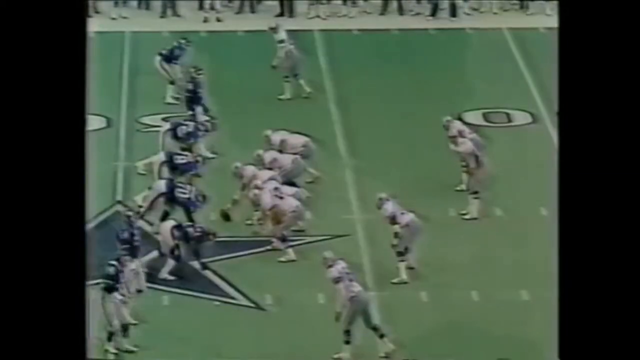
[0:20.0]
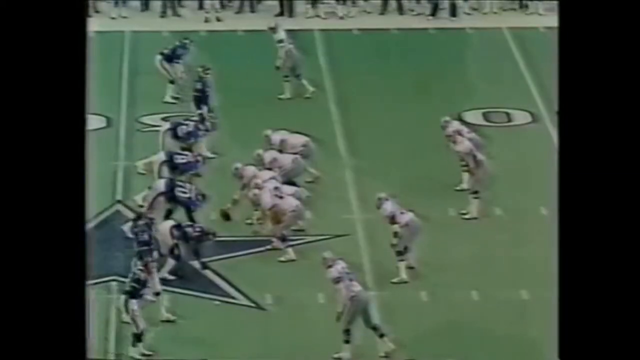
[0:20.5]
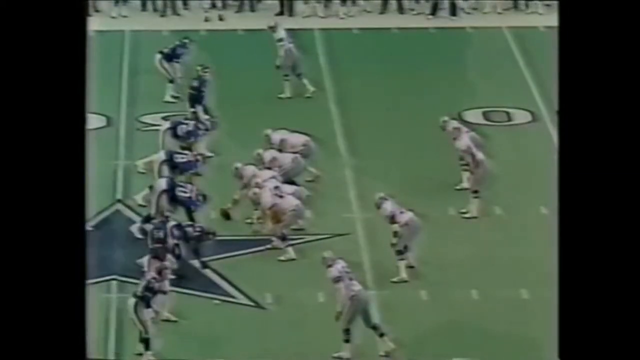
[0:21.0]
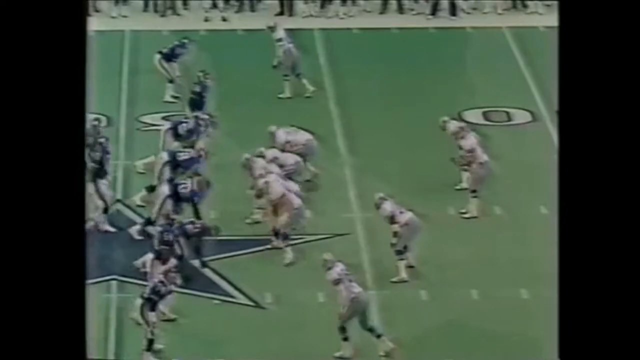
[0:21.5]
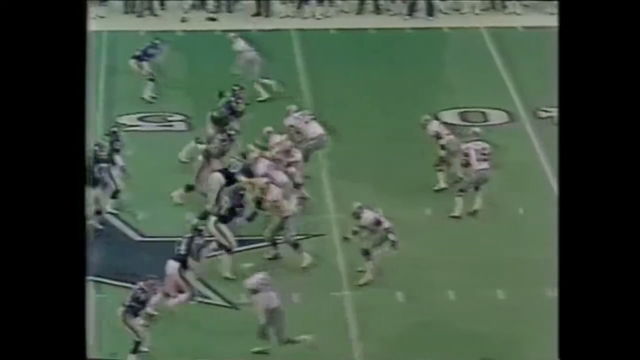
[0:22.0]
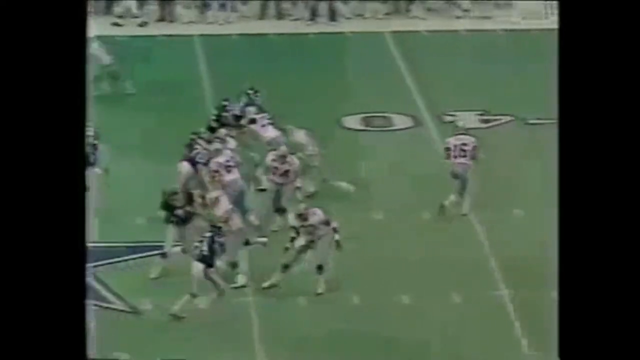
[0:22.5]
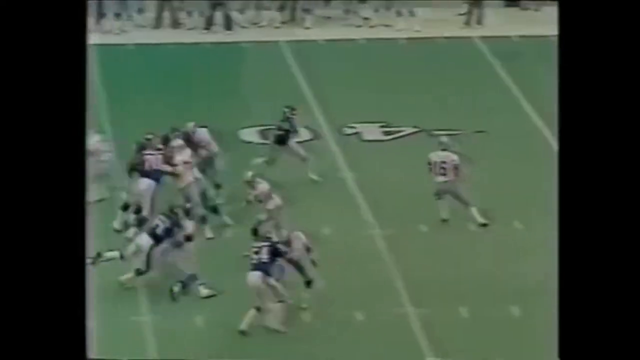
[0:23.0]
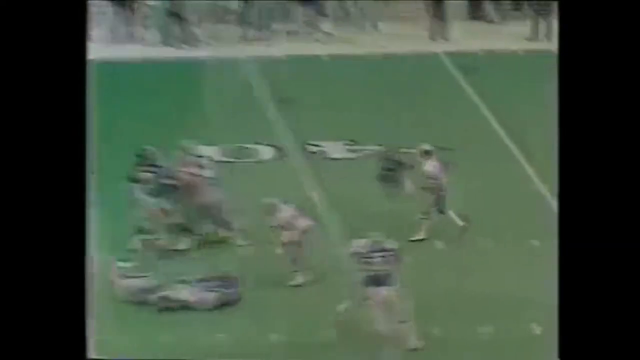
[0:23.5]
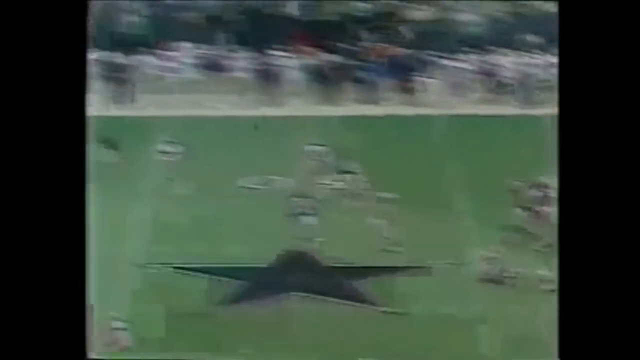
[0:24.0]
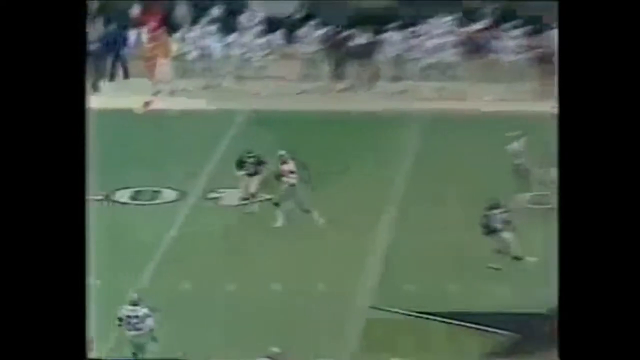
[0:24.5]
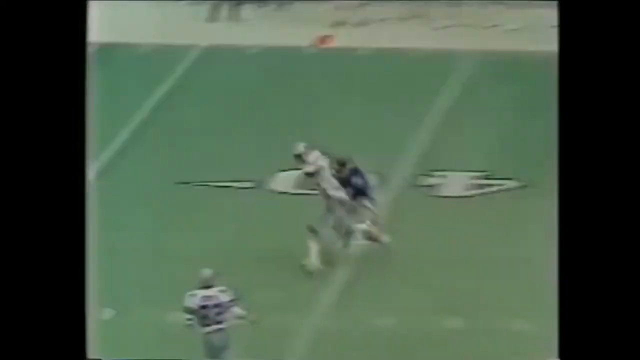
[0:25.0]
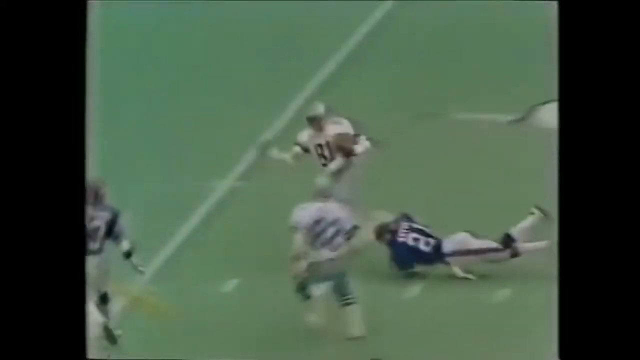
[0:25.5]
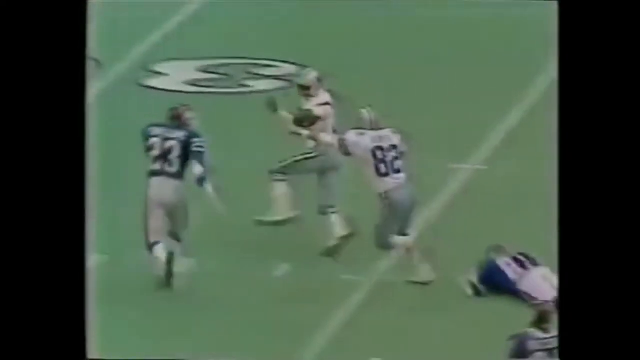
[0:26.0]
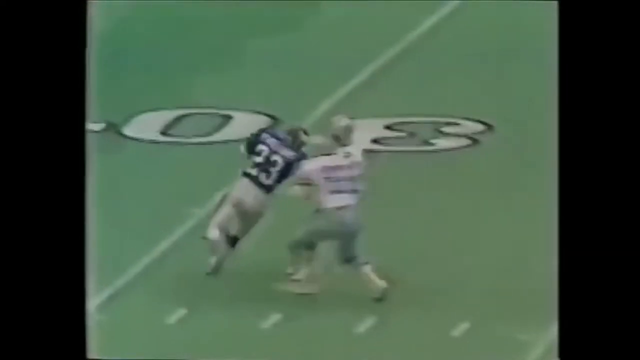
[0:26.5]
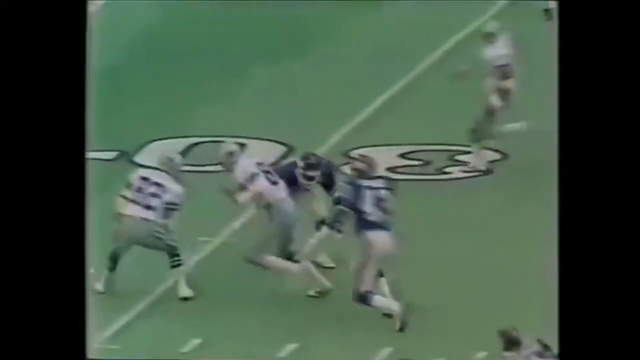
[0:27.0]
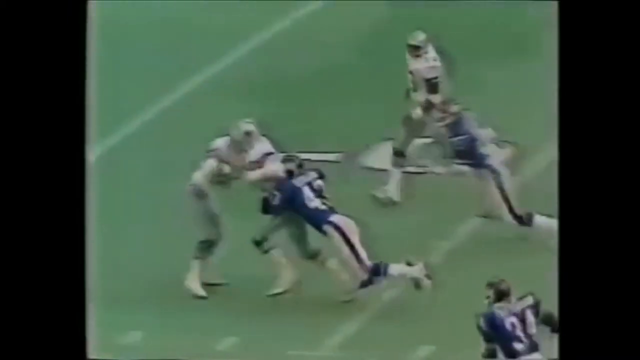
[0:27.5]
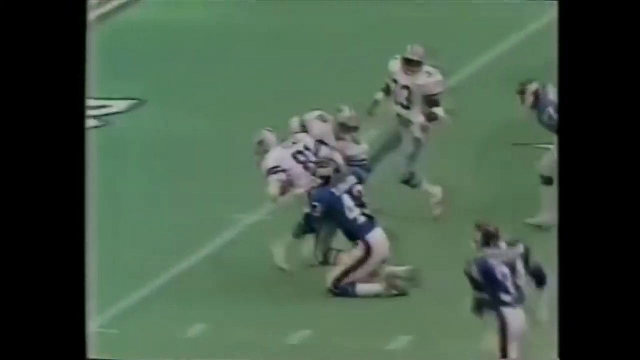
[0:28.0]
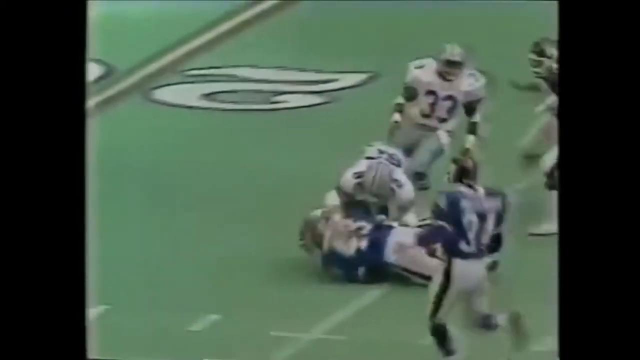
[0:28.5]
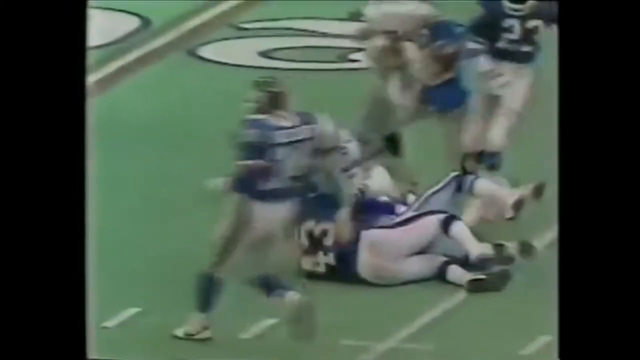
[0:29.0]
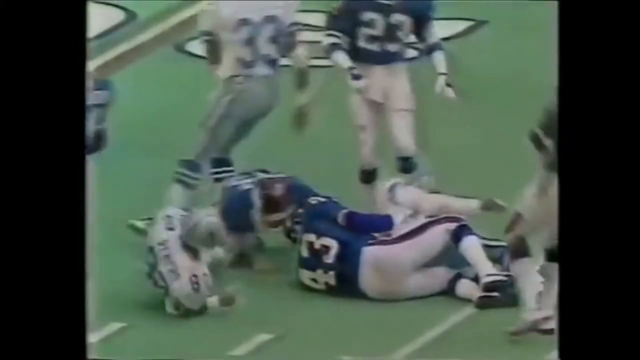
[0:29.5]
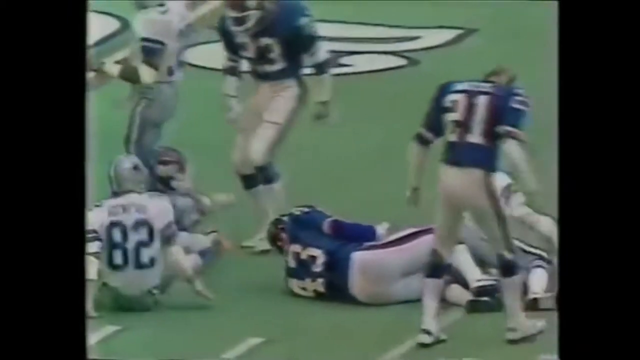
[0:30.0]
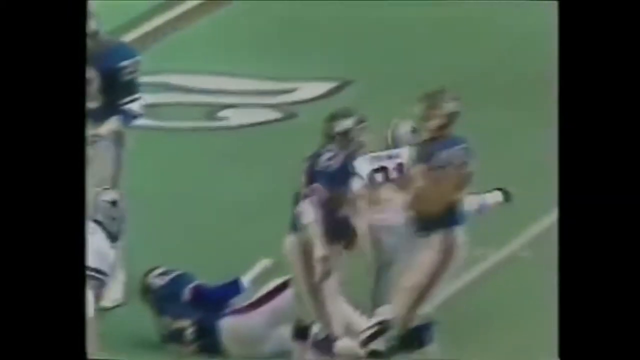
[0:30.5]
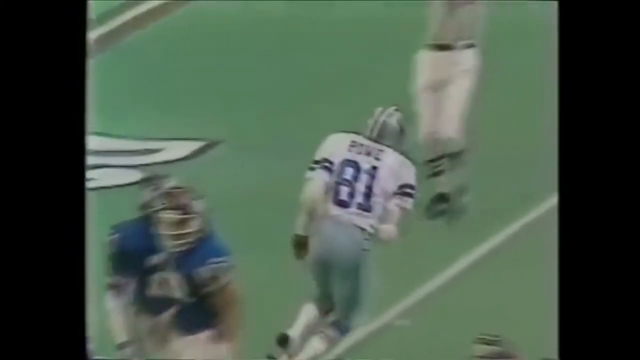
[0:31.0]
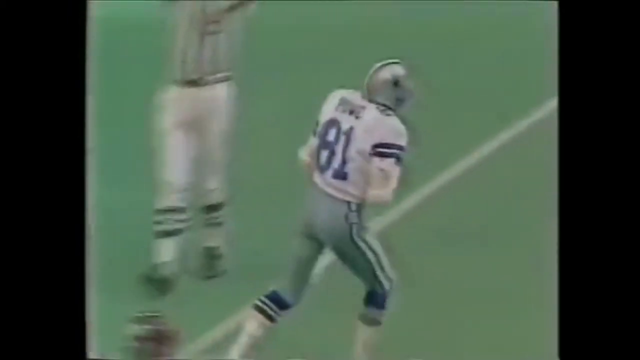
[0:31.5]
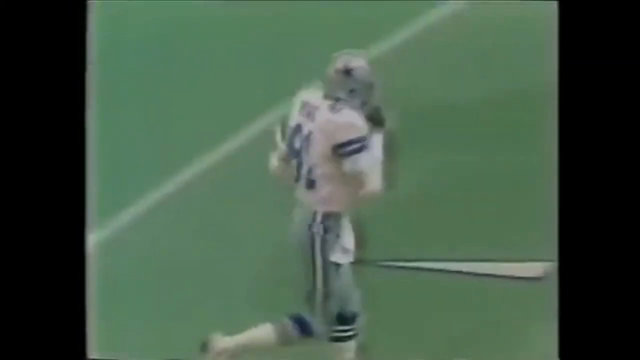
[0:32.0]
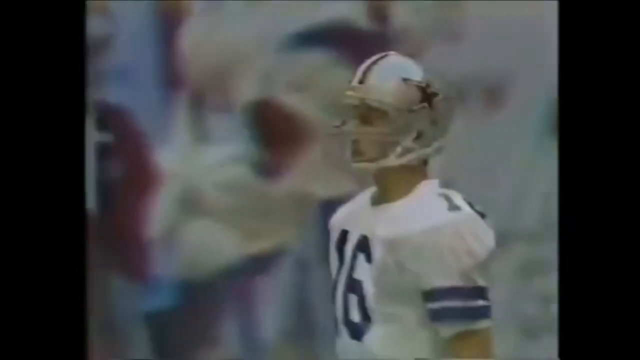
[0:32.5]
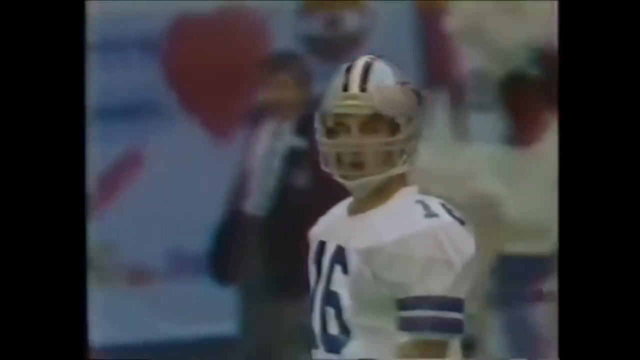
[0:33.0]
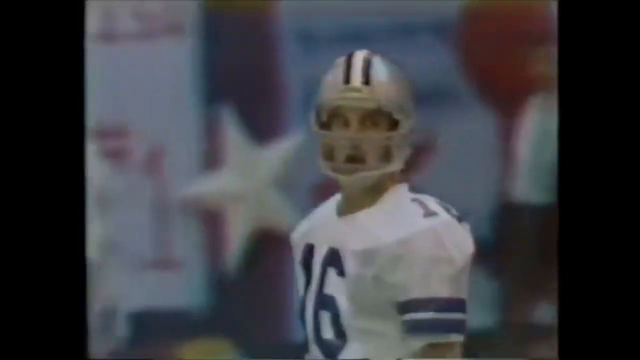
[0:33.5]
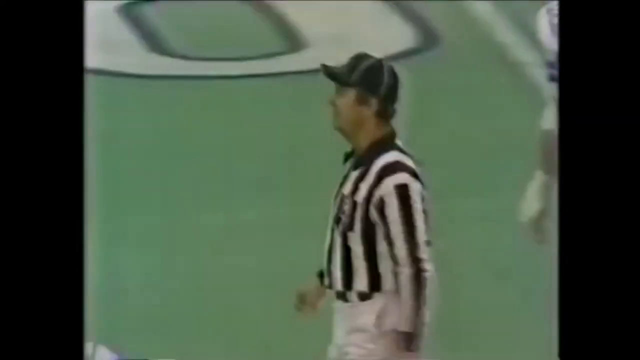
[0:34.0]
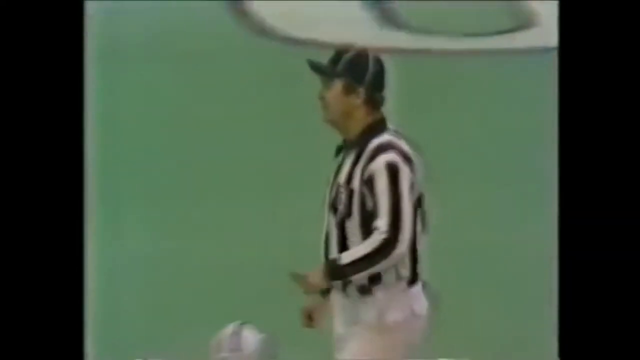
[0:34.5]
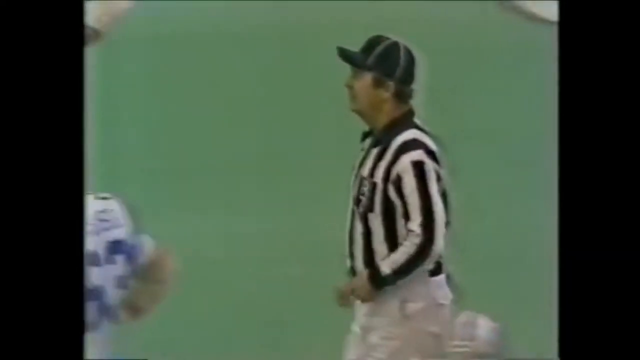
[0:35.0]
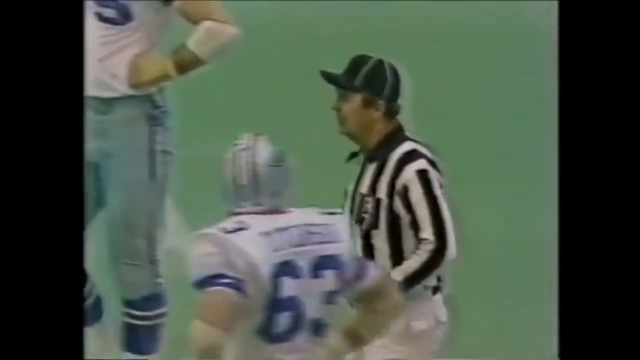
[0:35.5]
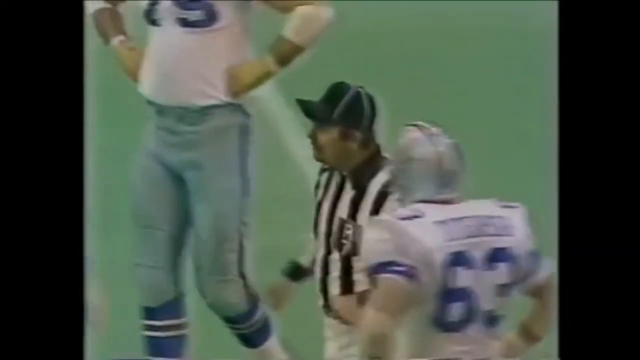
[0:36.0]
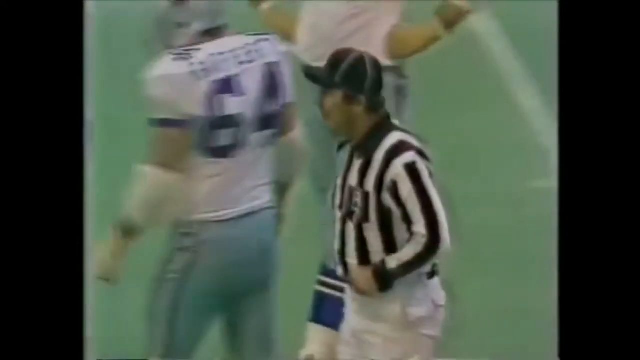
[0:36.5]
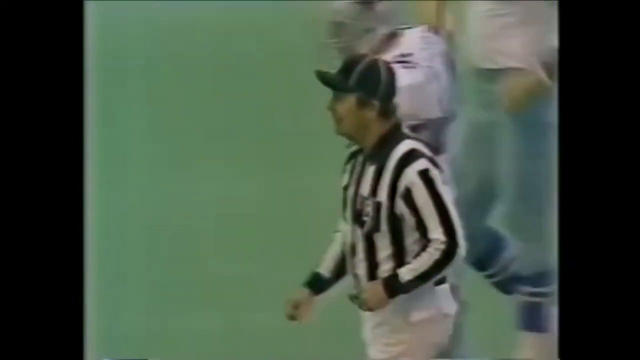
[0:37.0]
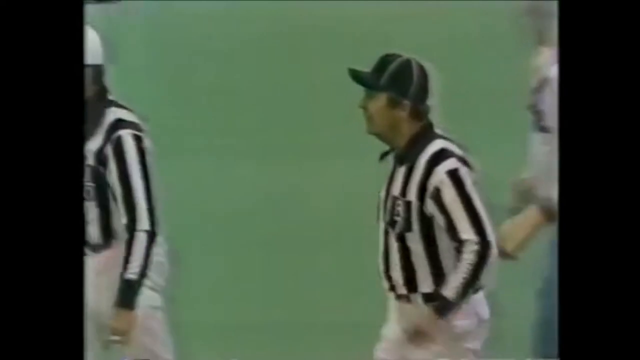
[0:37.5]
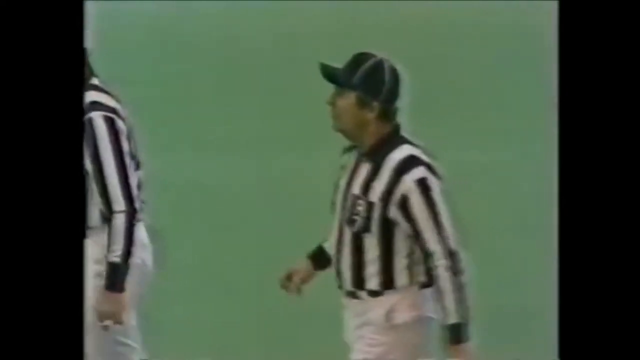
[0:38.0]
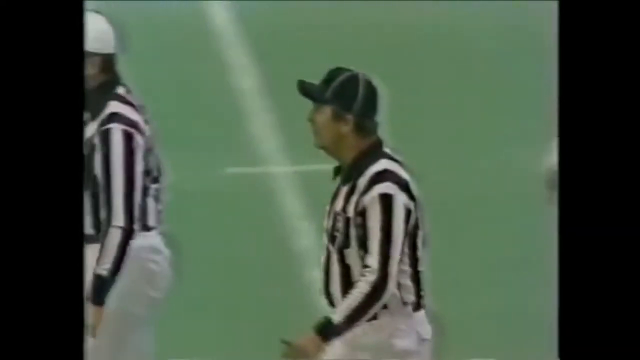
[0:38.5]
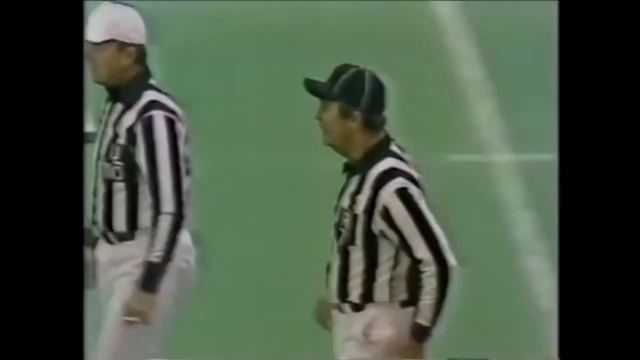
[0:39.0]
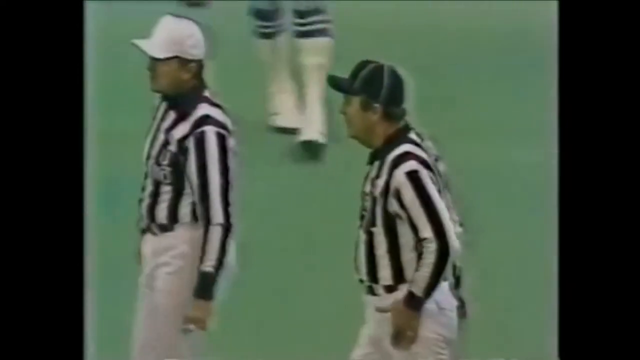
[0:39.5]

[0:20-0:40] What looks to be vintage footage of a Dallas Cowboys football game plays, very dark, grainy and out of focus. The first shot looks sort of overhead and down onto the field, where players are lined up in a scrimmage. One team wears light-colored jerseys and the other wears what look like navy blue jerseys. The ball is hiked and passed down the field, and a Cowboys player in white, labeled number 81, runs, then falls down after he is tackled. The video cuts to a referee walking on the field in a black cap, a long-sleeved black and white striped shirt and white pants. He goes into the players and meets up with another referee wearing a white cap. They meet up with a third referee and start to speak to each other.